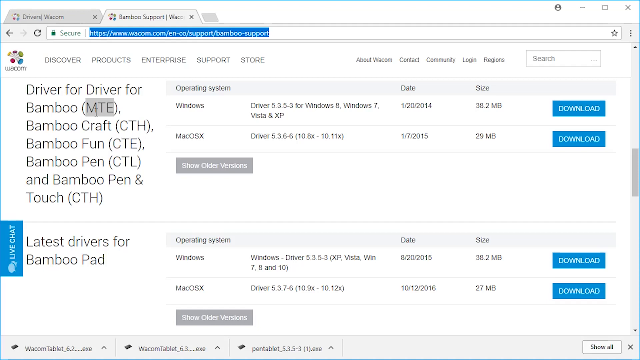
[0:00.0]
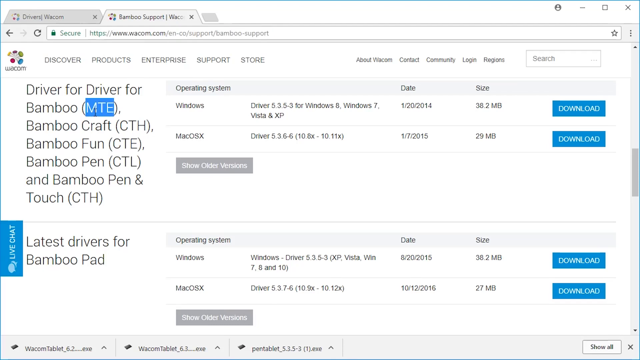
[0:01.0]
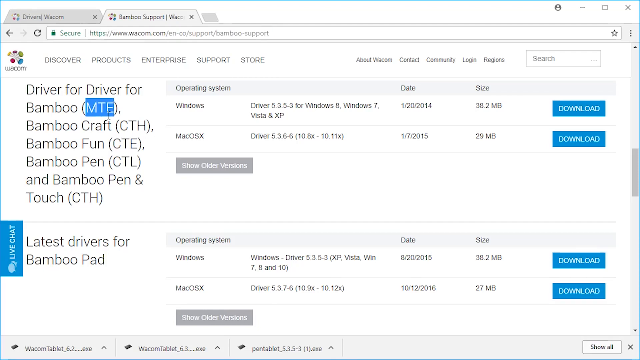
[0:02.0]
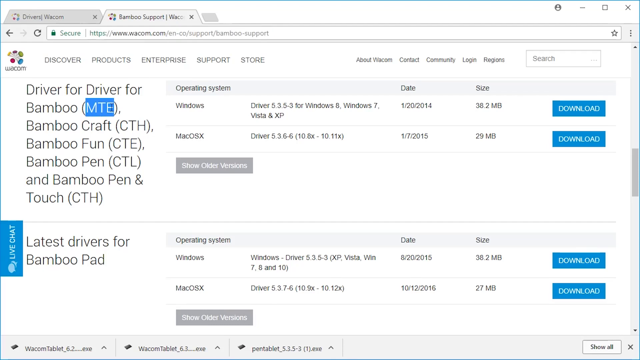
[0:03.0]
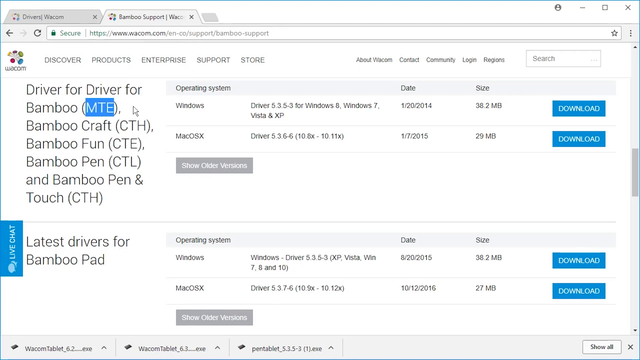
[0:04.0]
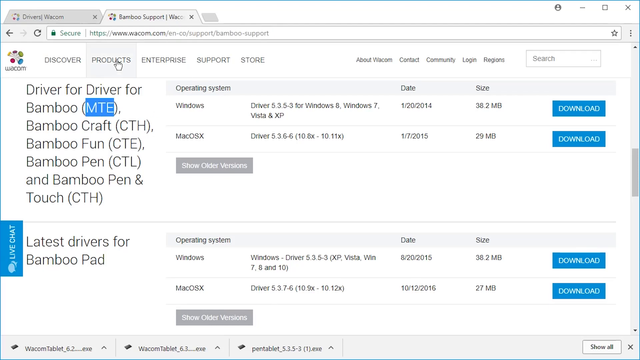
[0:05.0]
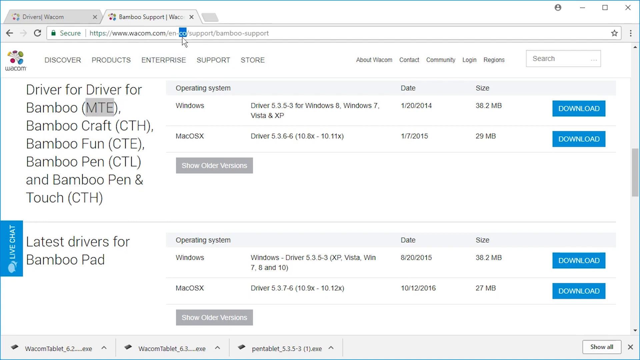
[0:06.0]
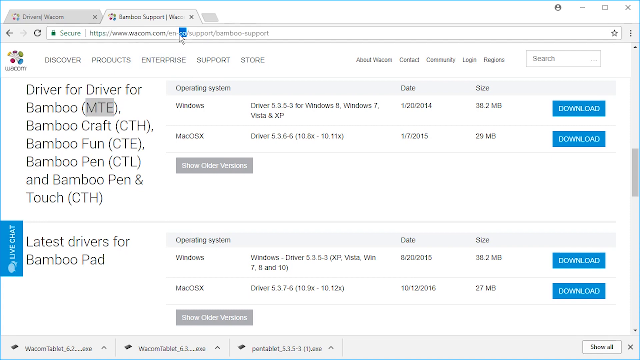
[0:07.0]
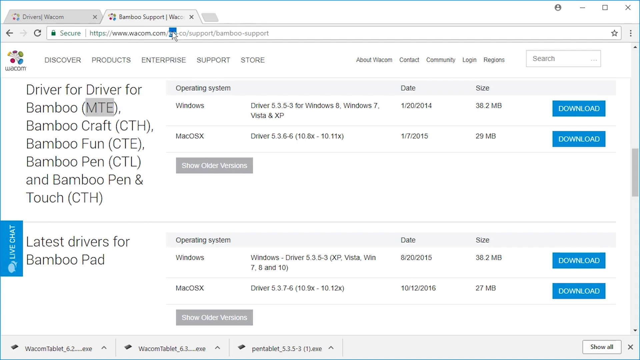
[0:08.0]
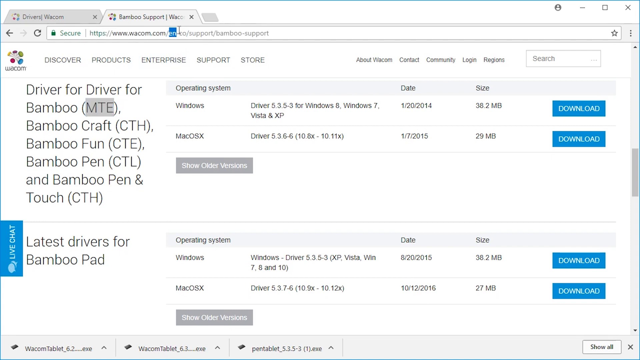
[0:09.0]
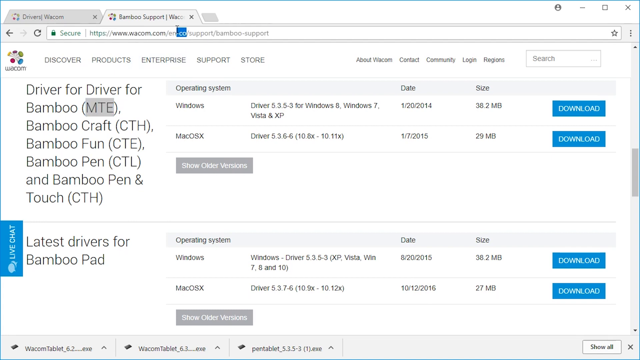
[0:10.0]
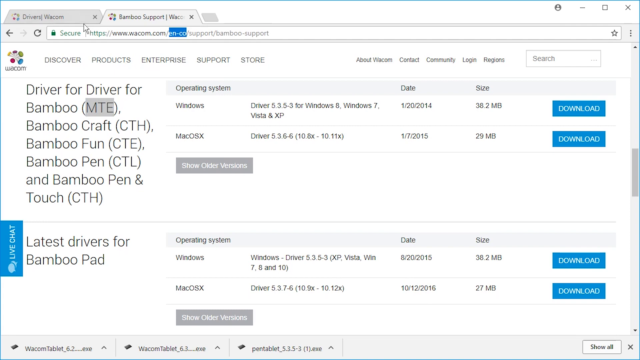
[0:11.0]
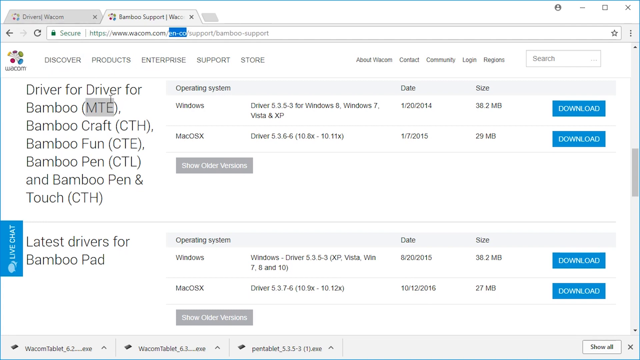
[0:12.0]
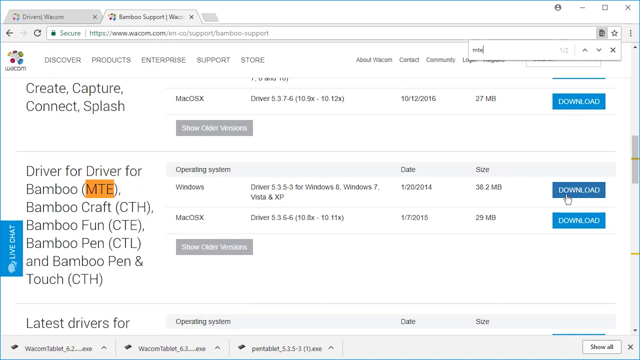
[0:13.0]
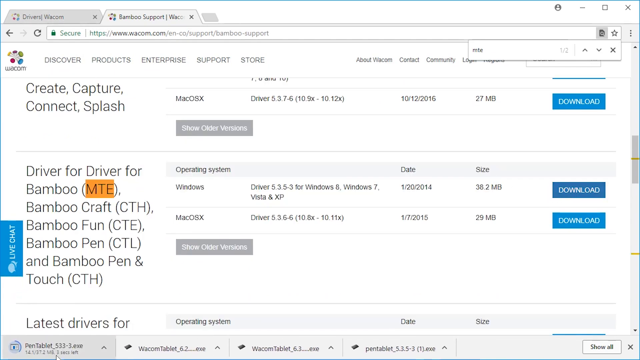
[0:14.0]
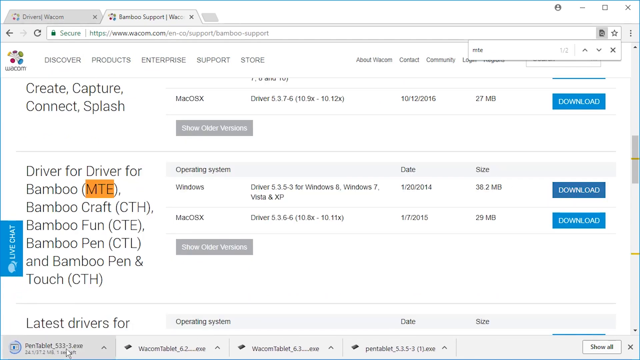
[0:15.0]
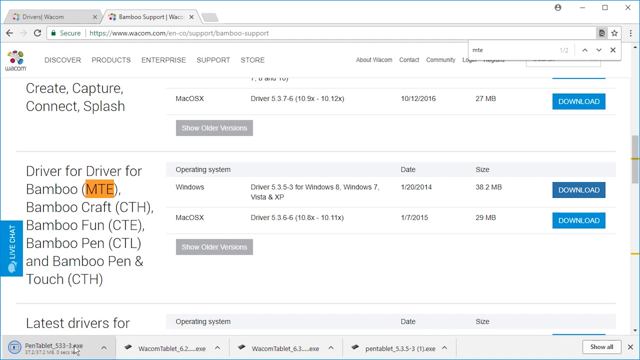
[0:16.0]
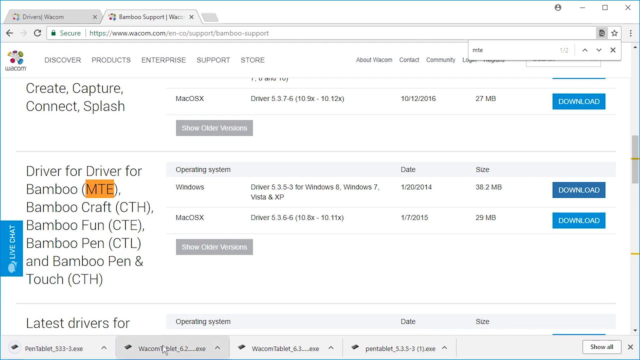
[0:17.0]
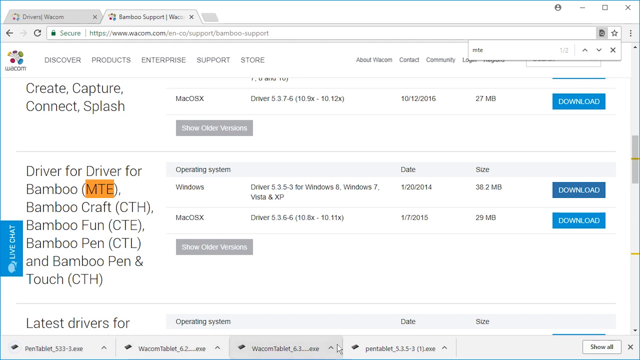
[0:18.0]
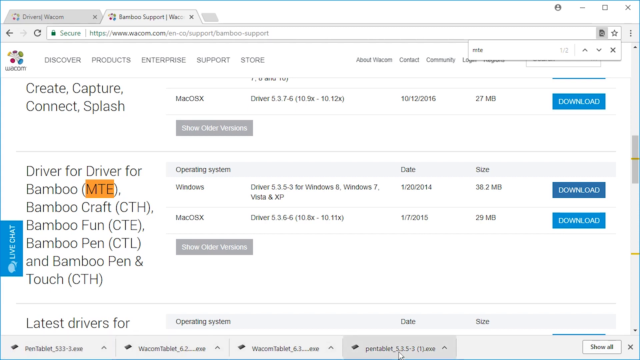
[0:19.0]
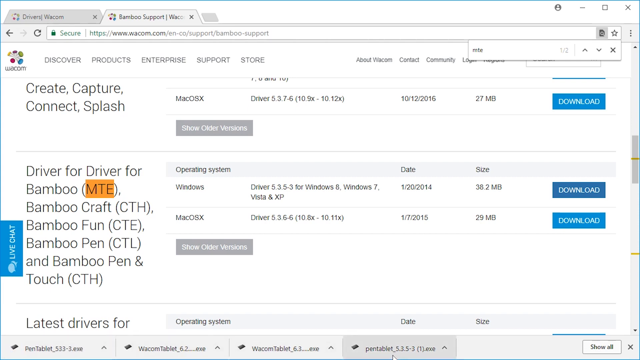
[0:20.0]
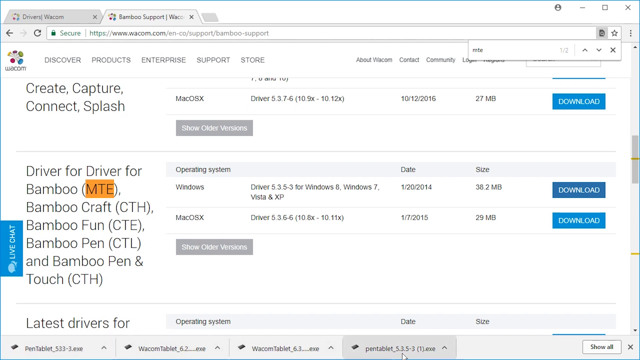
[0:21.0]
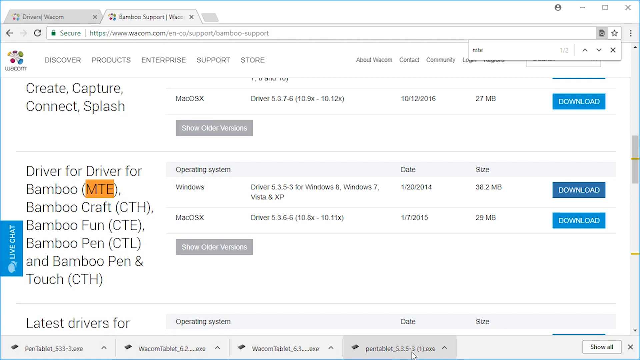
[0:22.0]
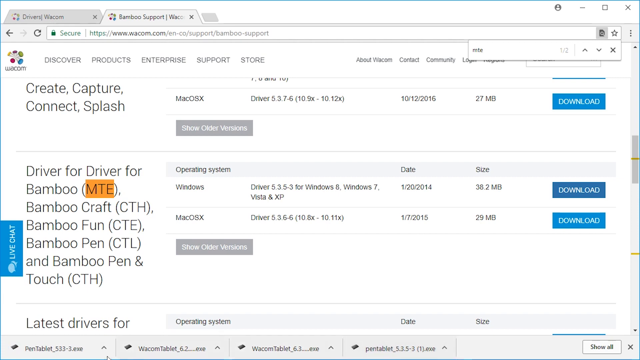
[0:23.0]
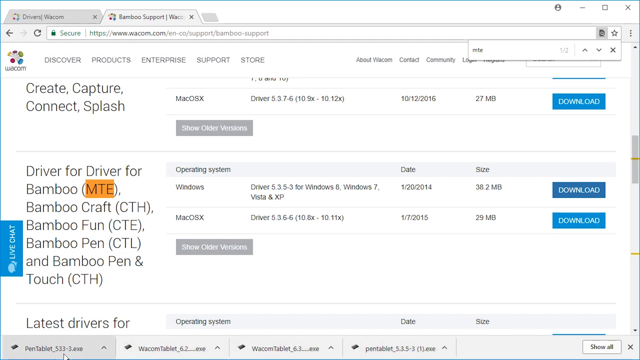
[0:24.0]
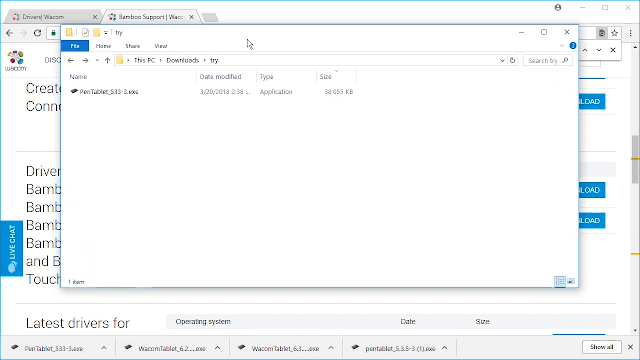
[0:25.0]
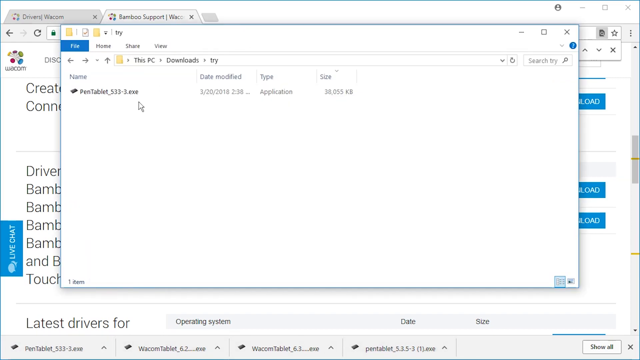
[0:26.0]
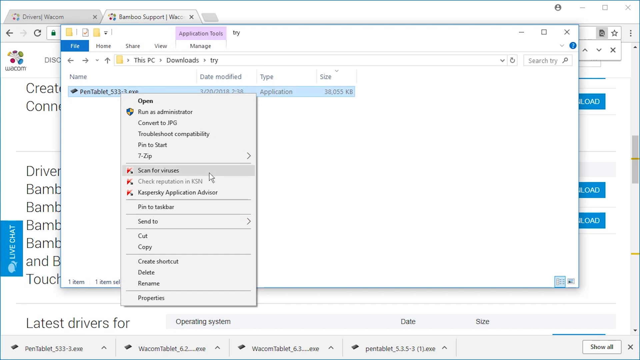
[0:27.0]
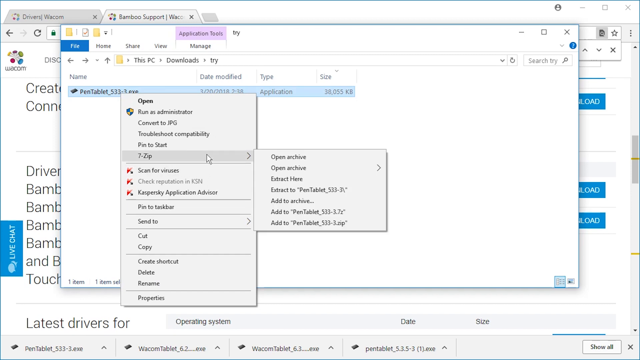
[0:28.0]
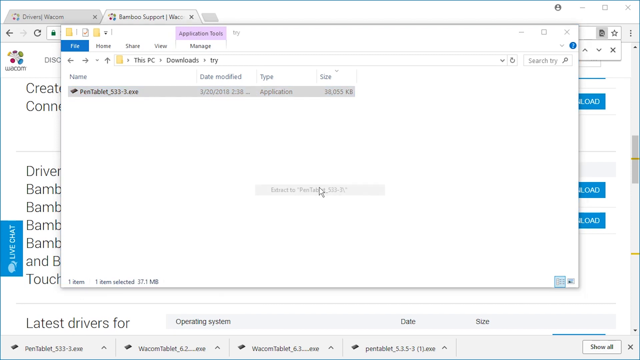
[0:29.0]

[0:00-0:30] A web browser is open with two tabs, "Watcom" and "Bamboo Support Watcom," with the Bamboo Support Watcom tab active and its address beginning "watcom.com." The main screen is white with black lettering, and the pull-down menus on the page are Discover, Products, Enterprise, Support, and Store. Different drivers are listed: Bamboo, Bamboo Craft, Bamboo Fun, Bamboo Pen, and Bamboo Pen and Touch, each followed by a set of three letters. The page gives instructions for downloading for either Windows or Mac OS X, listing Windows 8, Windows 7, Vista, and XP. A window then opens showing This PC, Downloads, a sub-directory, and a file "pentablet 1533-3.exe," which is clicked or right-clicked. 7-Zip then opens and a selection is made there.